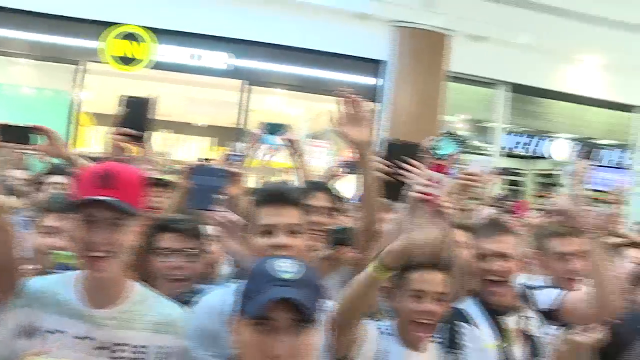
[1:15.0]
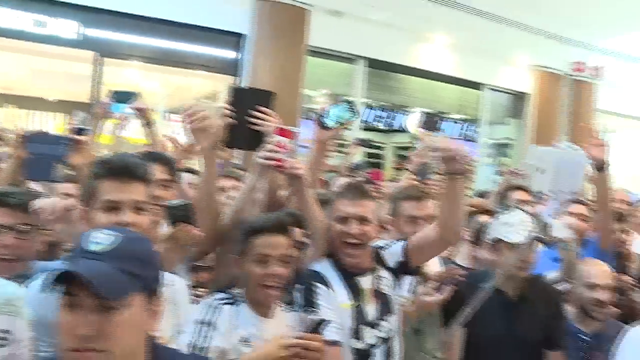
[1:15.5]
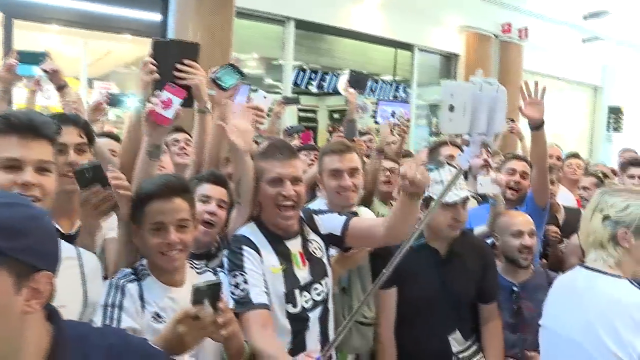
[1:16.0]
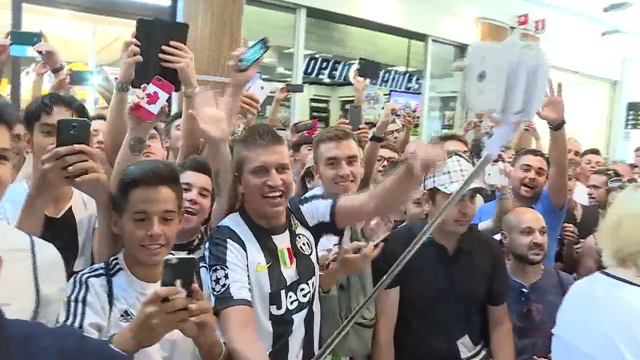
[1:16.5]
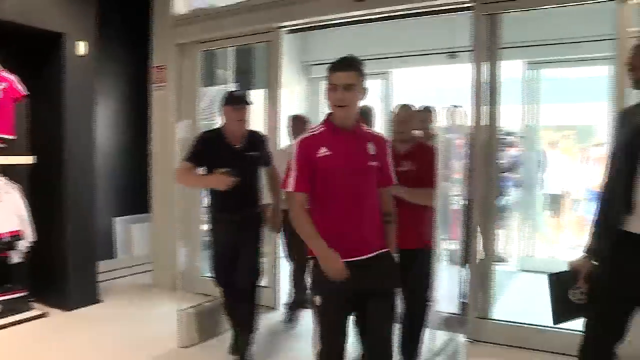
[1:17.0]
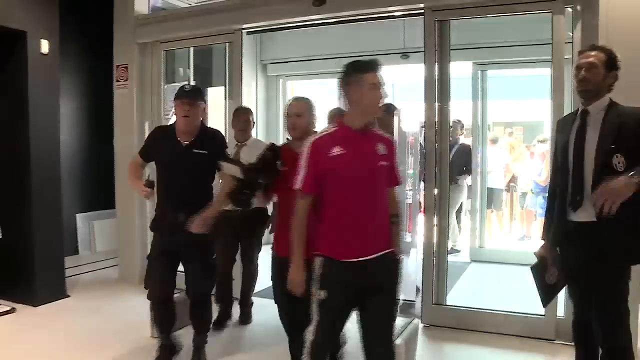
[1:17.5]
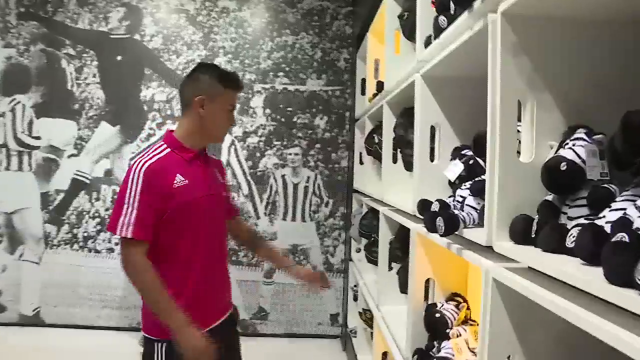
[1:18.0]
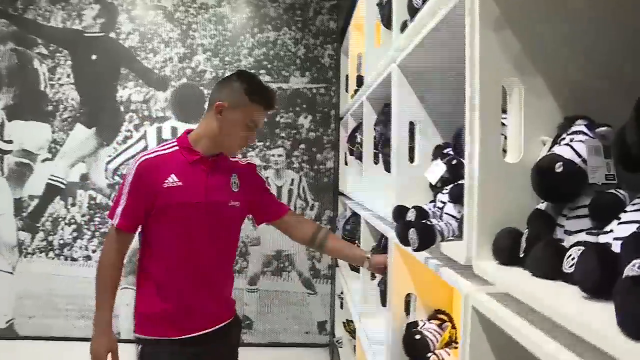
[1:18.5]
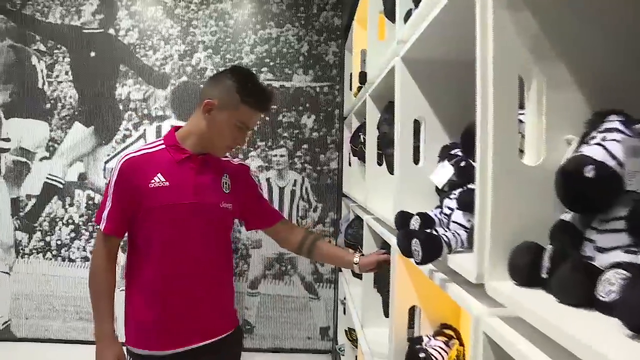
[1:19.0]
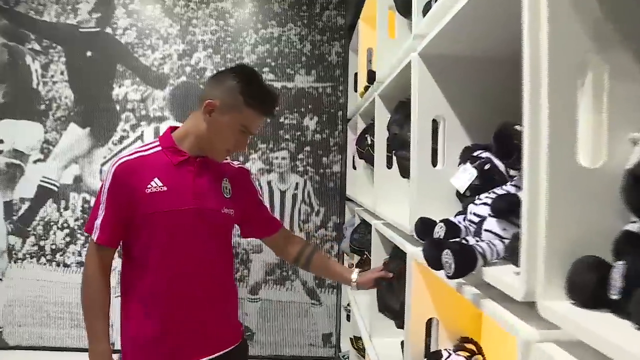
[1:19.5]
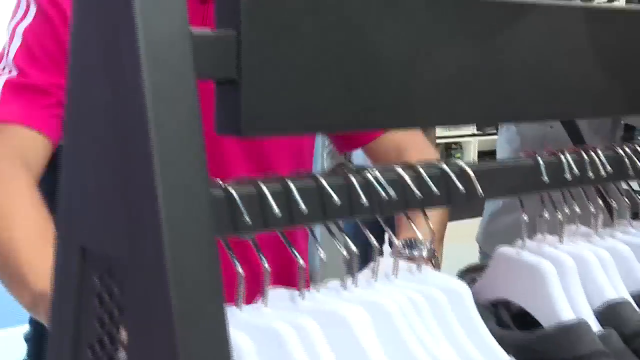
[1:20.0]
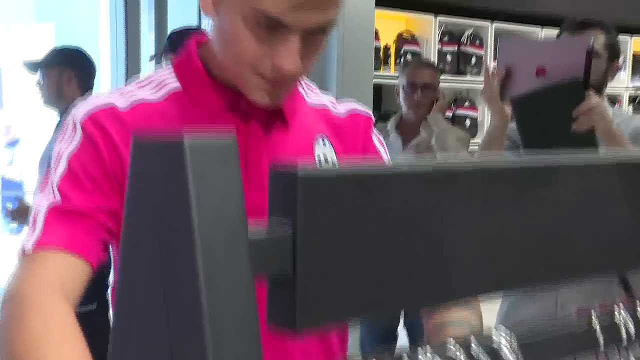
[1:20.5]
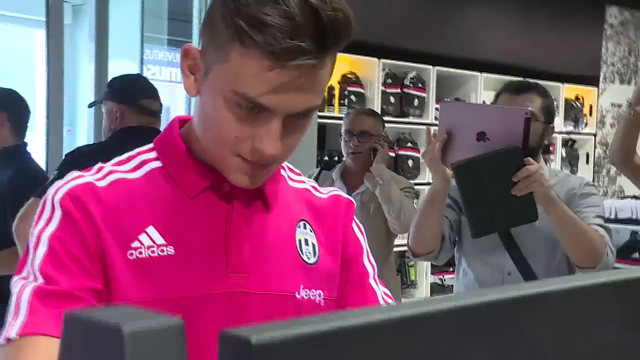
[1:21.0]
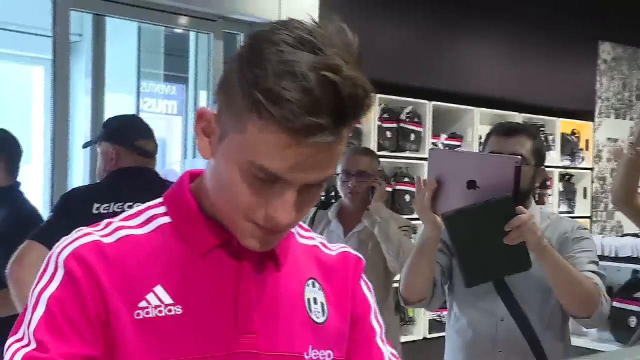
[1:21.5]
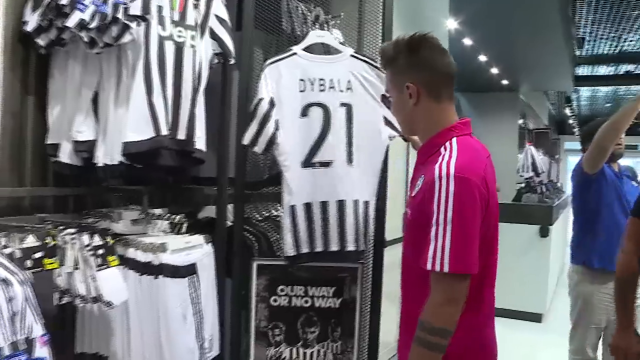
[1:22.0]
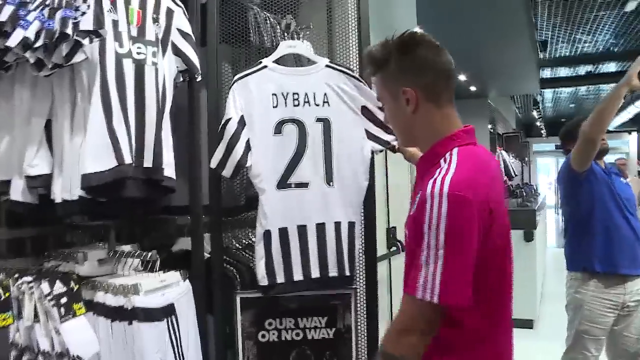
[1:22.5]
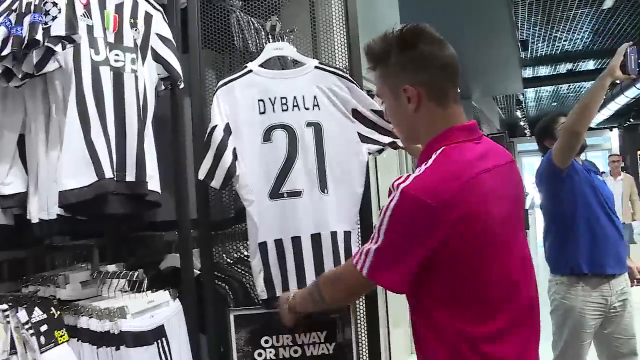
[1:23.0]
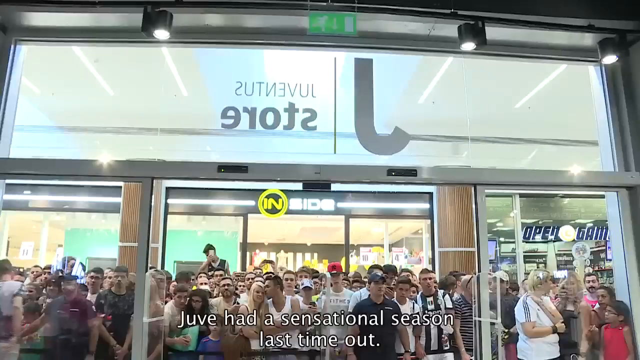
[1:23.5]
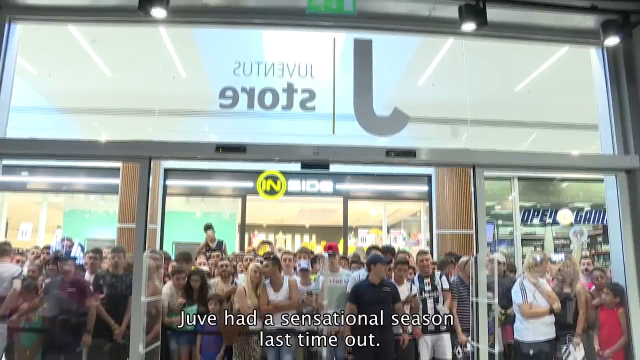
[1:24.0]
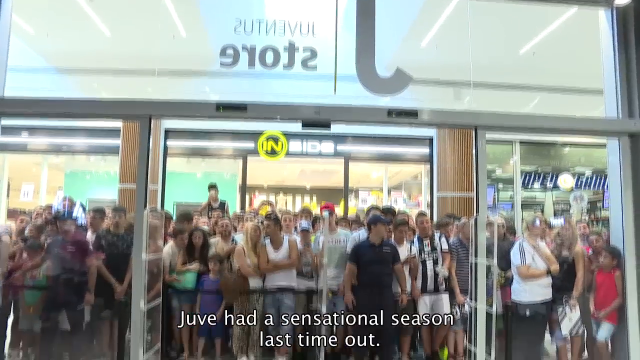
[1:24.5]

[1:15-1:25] A large crowd of happy fans smile, wave their hands, pull out their phones and take pictures. Several other fans appear to hold signs and phones above their heads, either taking photos of or recording Paolo Dybala's entrance. There are at least several hundred people there. He enters the club store, where several Juventus players' jerseys are on a rack, most of them appearing to be on hangers. He walks up to his own jersey and stares at it as the camera captures him looking at the back with his number, 21.